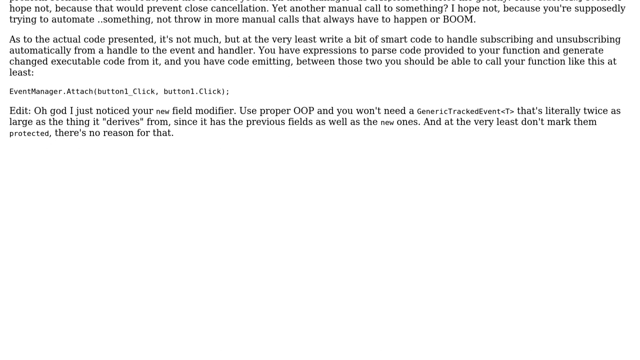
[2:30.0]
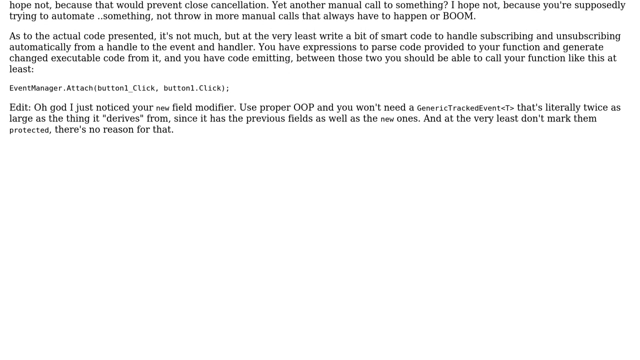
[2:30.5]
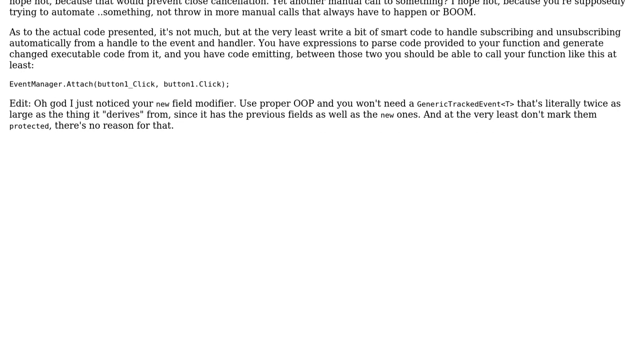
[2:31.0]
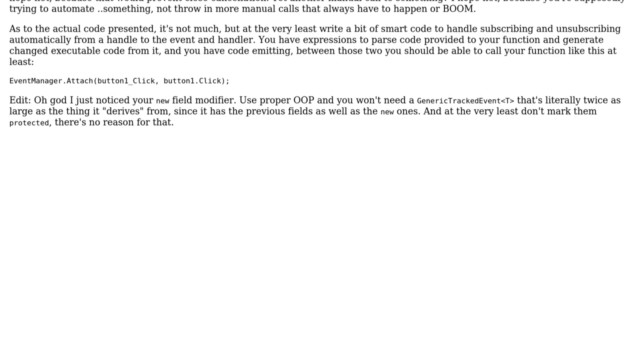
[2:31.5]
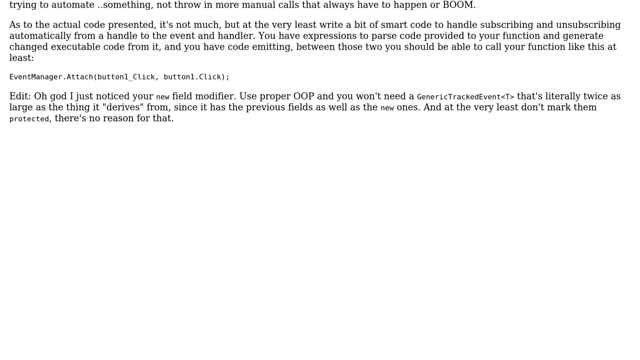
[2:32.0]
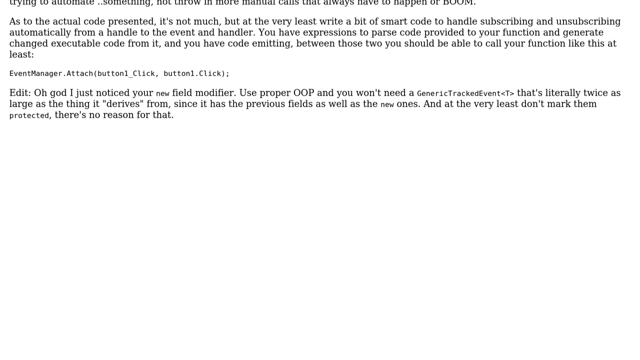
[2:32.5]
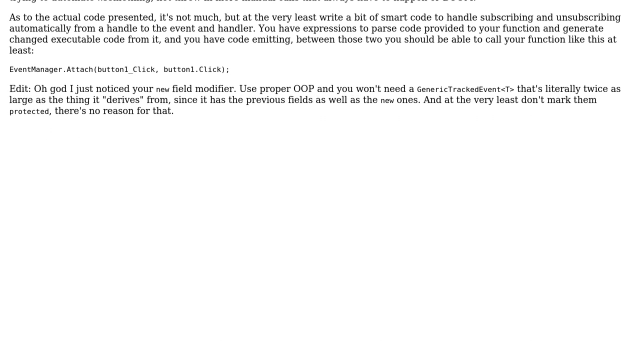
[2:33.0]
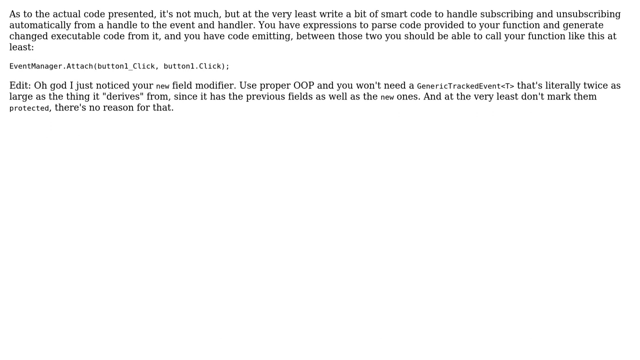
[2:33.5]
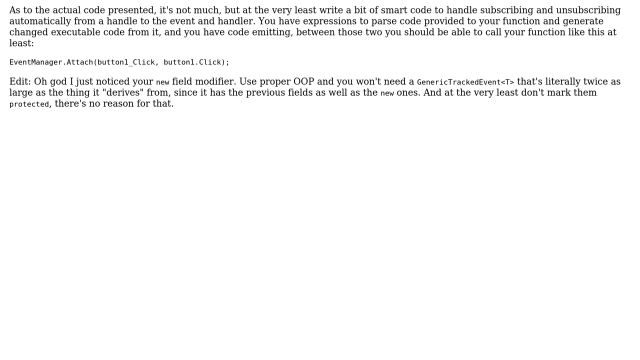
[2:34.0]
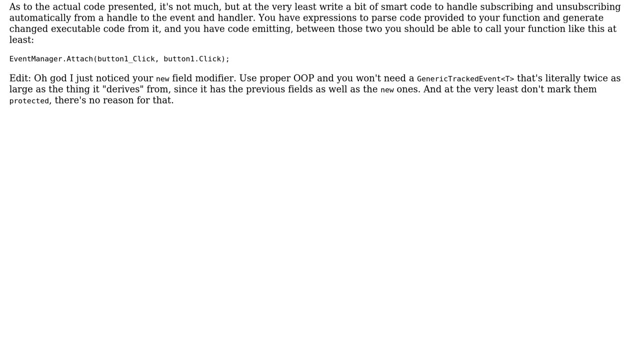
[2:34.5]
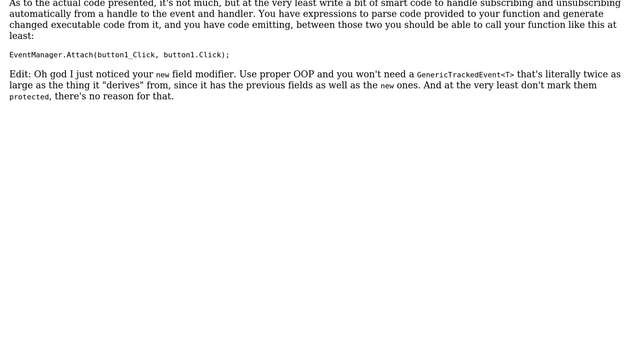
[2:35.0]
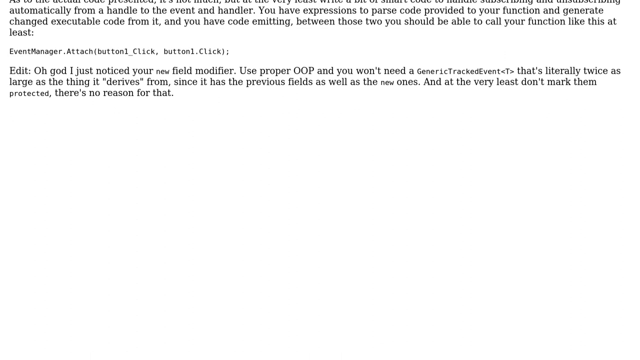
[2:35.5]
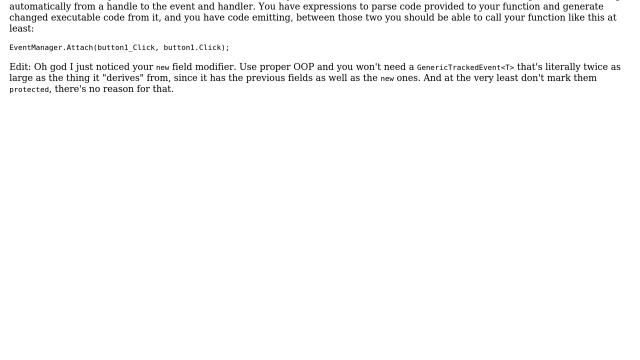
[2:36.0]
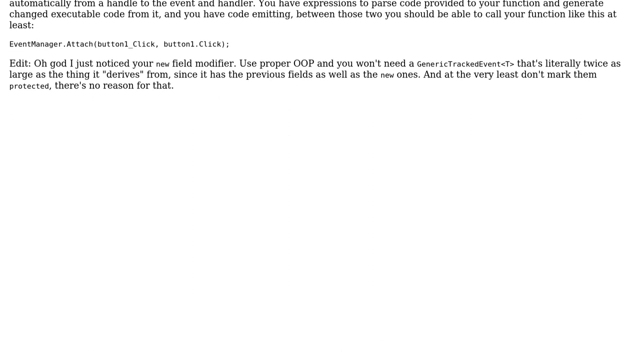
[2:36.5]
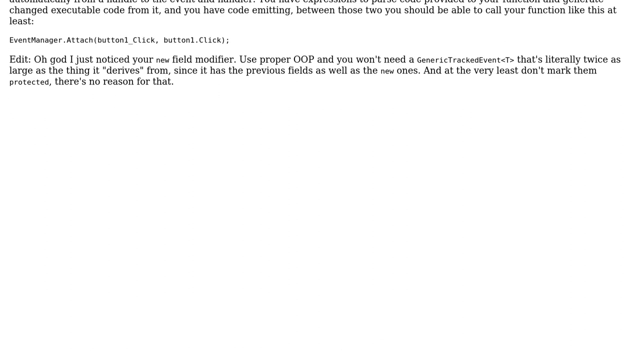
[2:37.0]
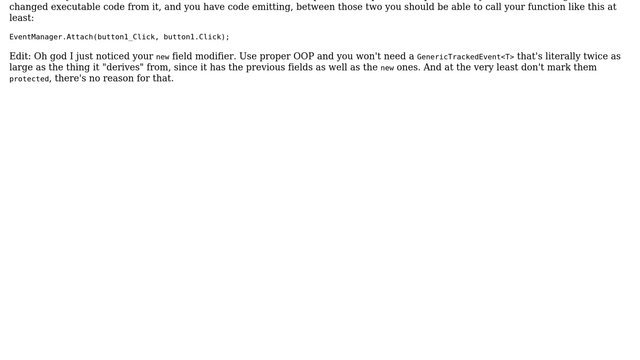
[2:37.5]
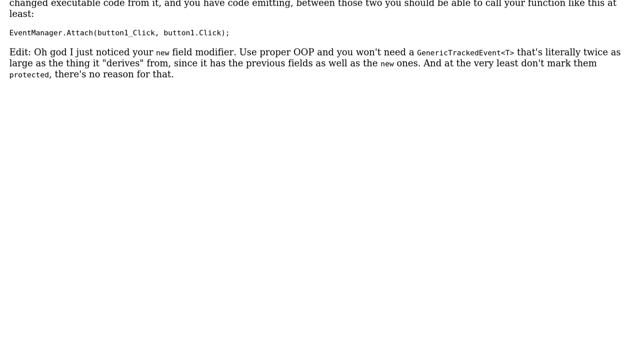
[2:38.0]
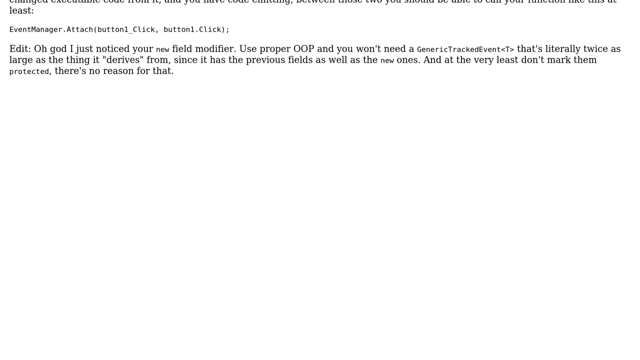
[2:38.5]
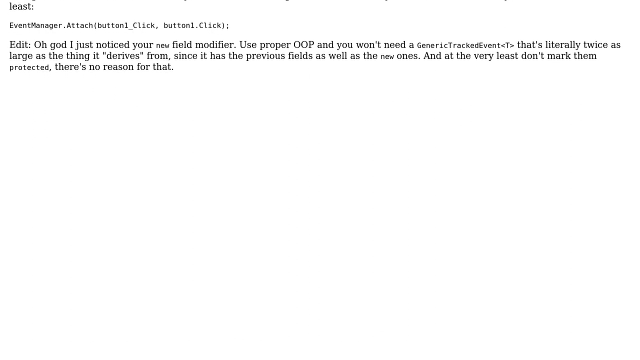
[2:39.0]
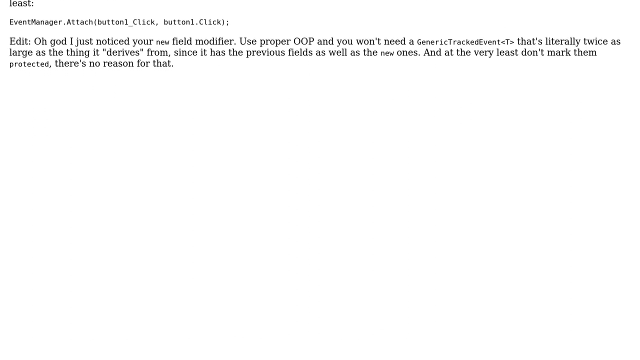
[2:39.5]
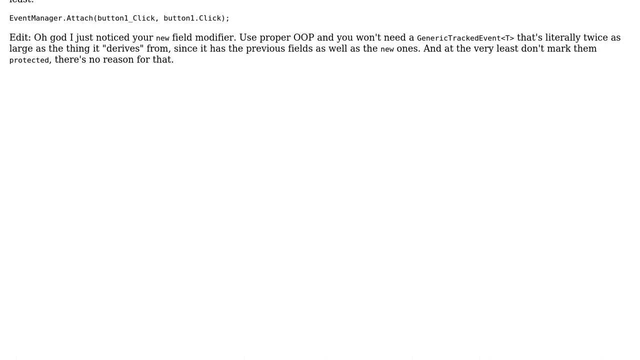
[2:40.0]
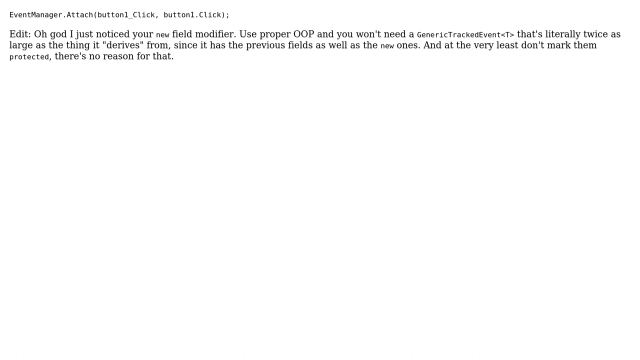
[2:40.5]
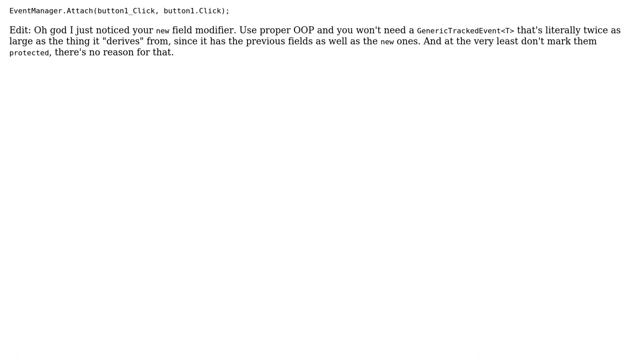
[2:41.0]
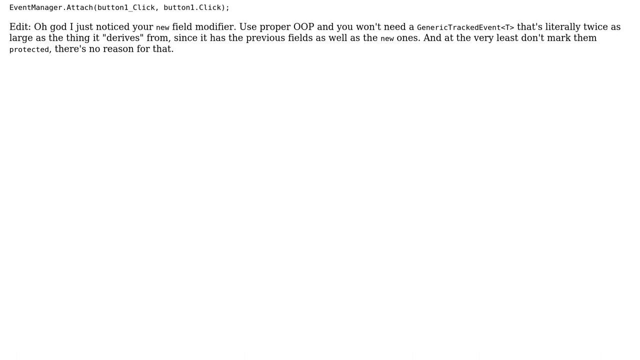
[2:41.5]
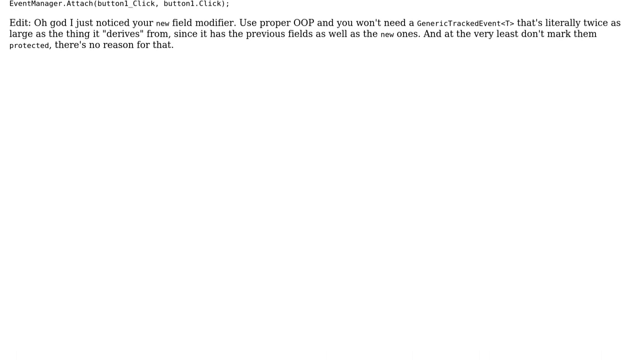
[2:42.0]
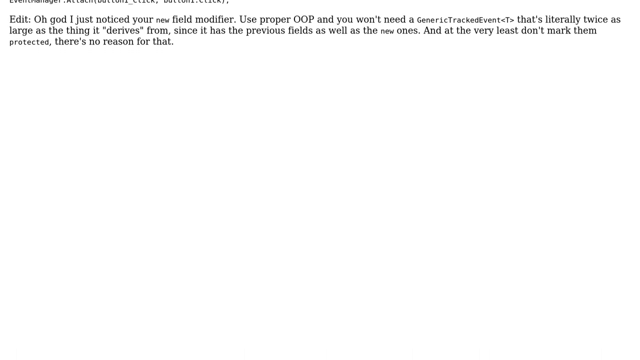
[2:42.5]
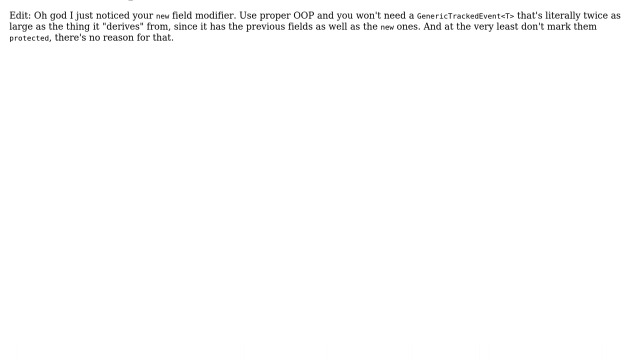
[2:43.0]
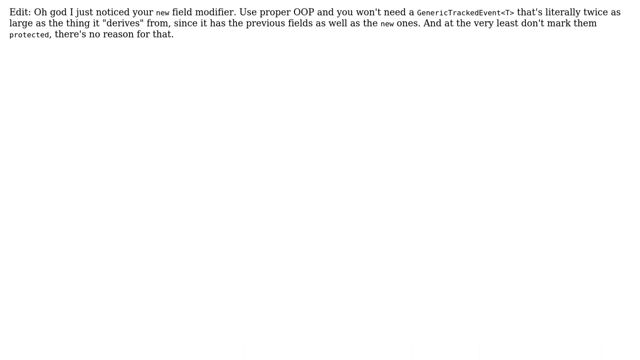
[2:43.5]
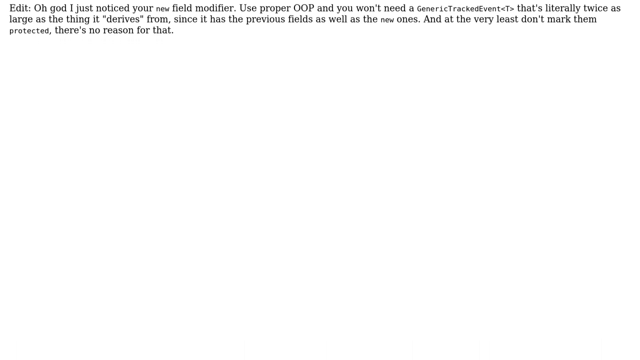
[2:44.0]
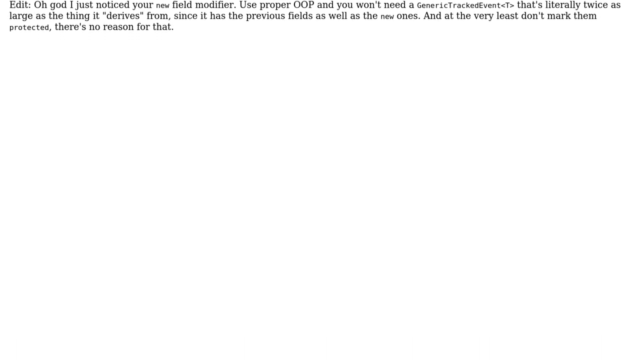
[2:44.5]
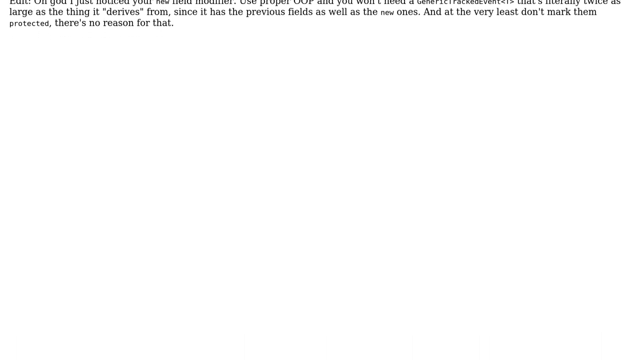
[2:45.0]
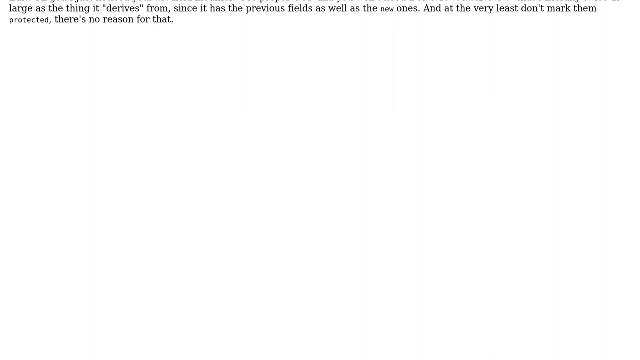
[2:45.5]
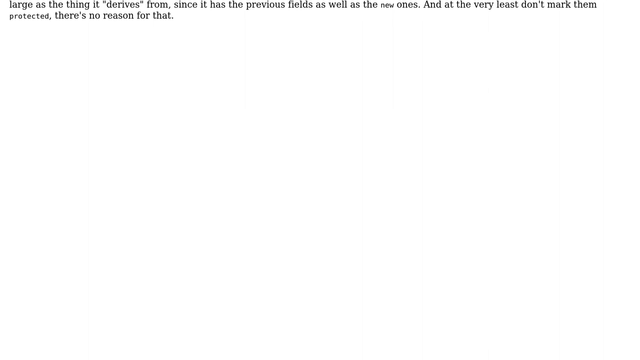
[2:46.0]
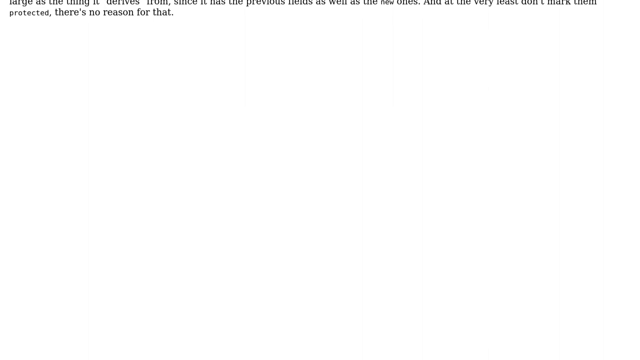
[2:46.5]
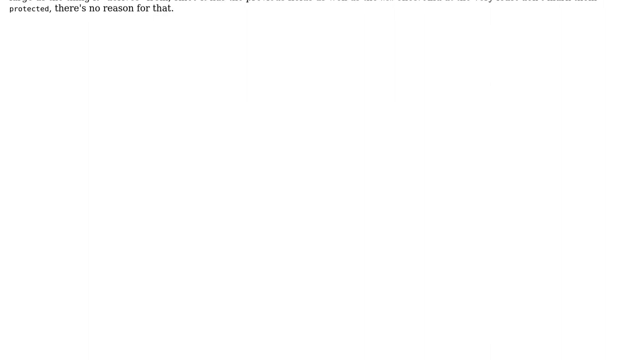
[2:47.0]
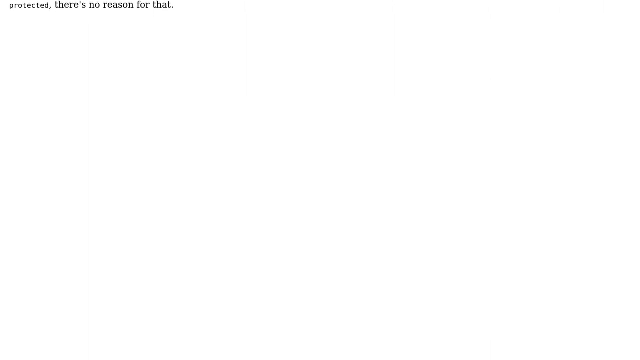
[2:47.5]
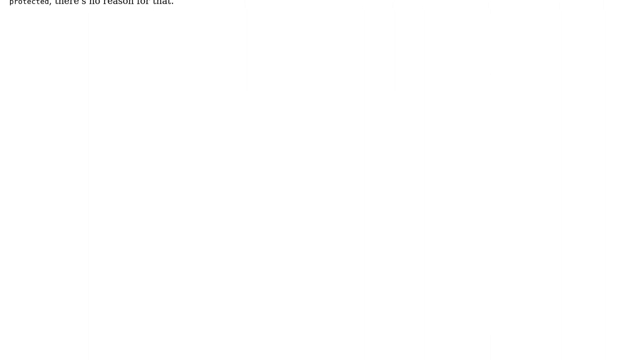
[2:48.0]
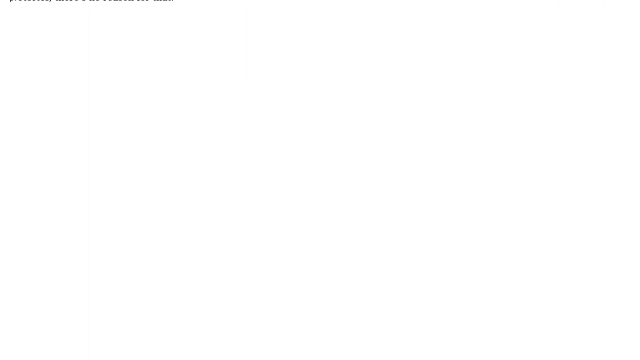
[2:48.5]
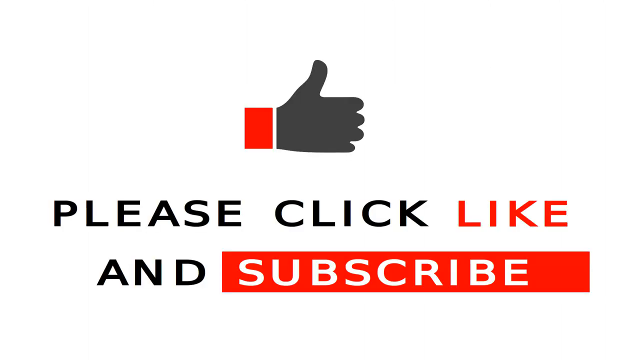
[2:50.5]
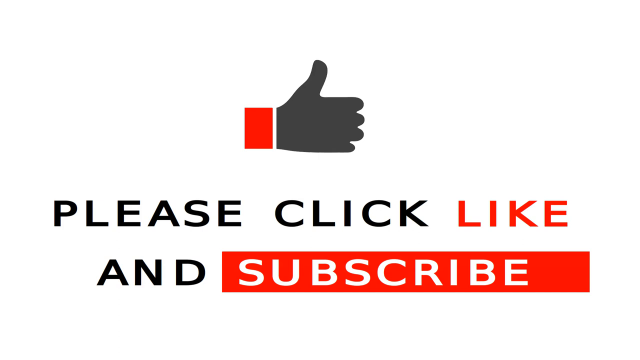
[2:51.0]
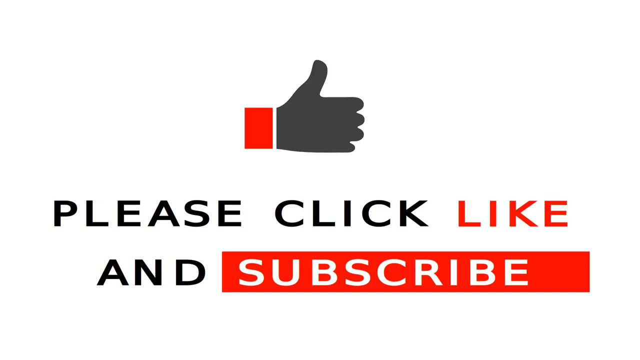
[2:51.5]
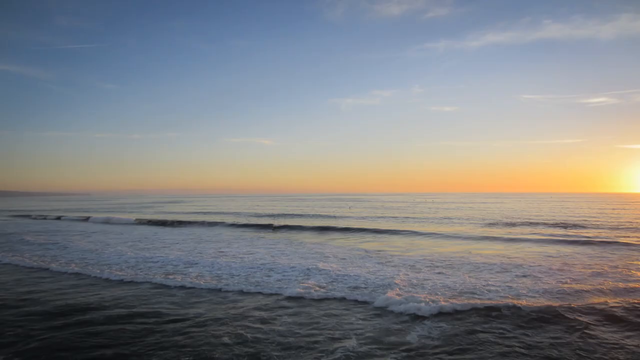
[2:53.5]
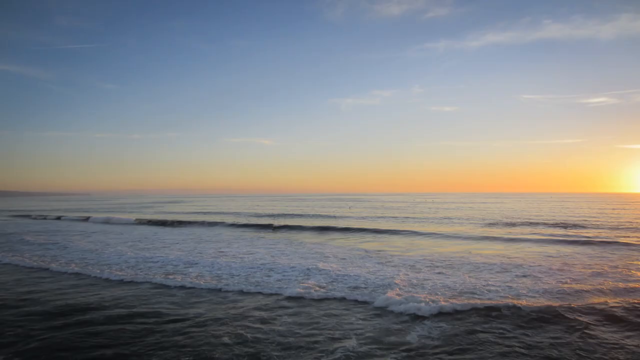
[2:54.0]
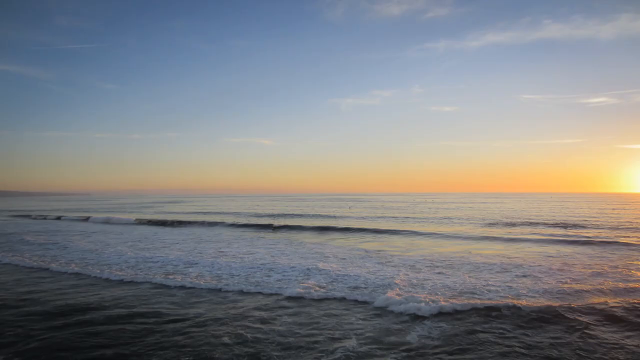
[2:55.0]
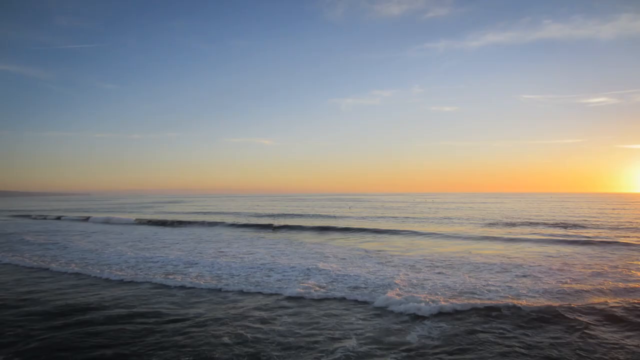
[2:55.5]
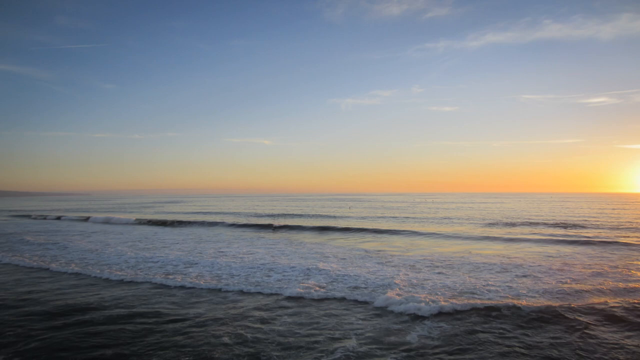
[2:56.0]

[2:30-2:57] A white background with very small black writing slowly scrolls down until all of the writing disappears and only a plain white background remains. A thumbs-up then appears on the screen; it is gray and filled in, with a red wrist cuff on it. Beneath it, black text says "please click" followed by "like" in red. After a line break, black text says "and," and to the right of that, in a filled-in red box with white writing, it says "subscribe." The view then pans to a picture of an ocean at either sunset or sunrise, with very calm waves and a clear blue sky. The sun is on the right-hand side, just outside the frame, meeting the line where the ocean starts and ends.